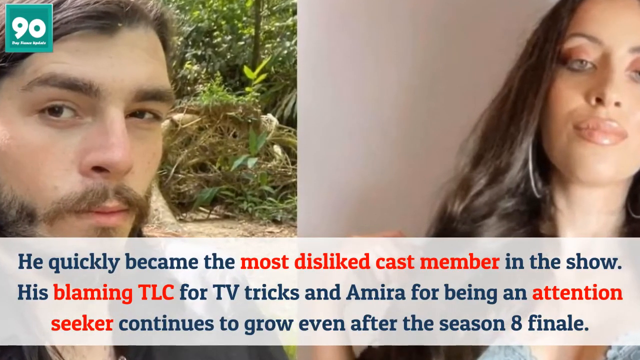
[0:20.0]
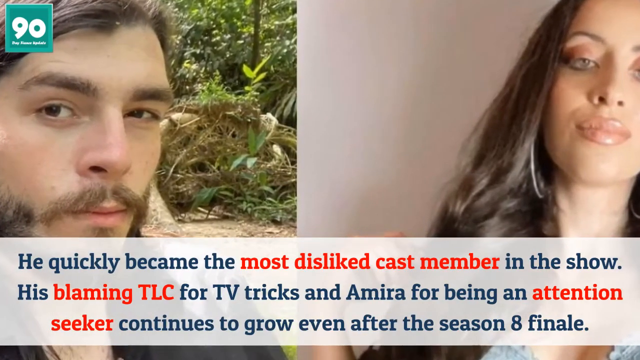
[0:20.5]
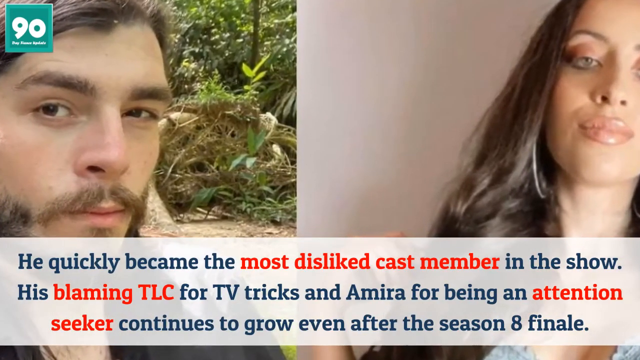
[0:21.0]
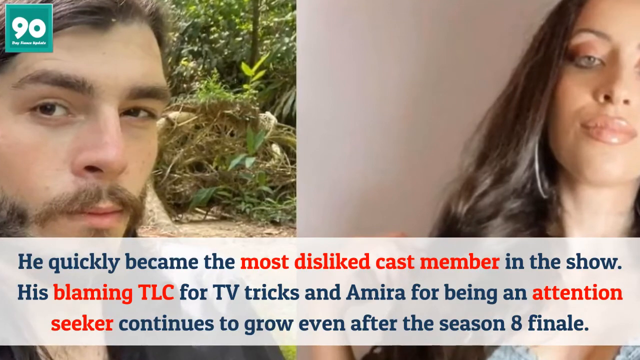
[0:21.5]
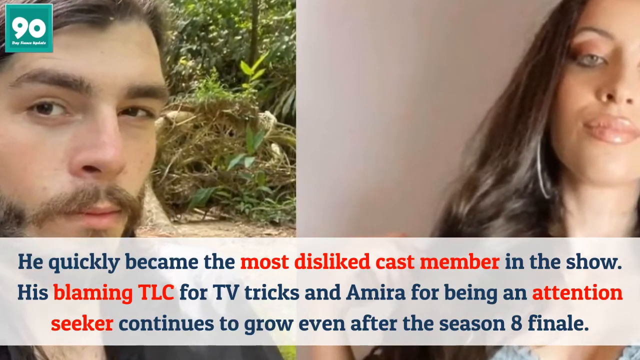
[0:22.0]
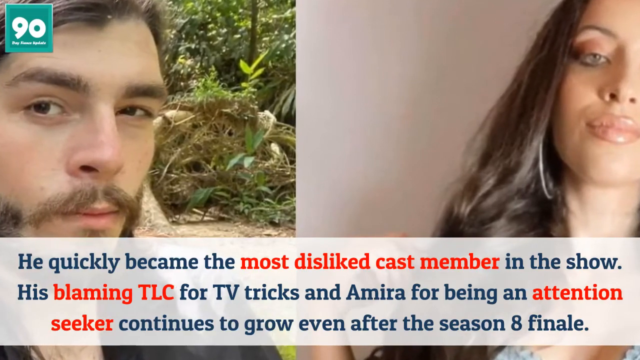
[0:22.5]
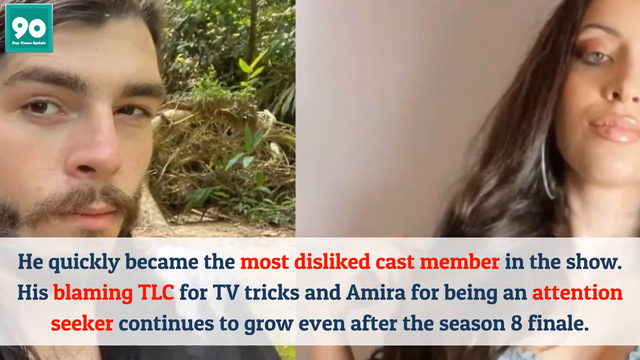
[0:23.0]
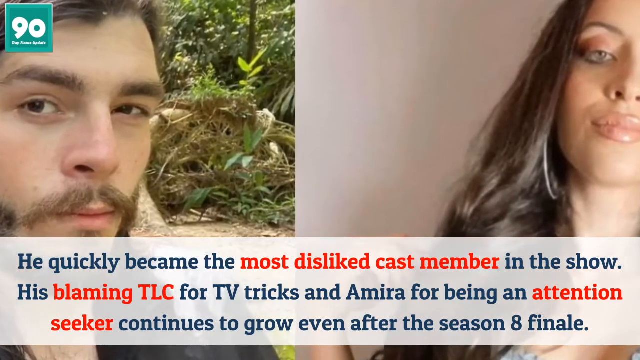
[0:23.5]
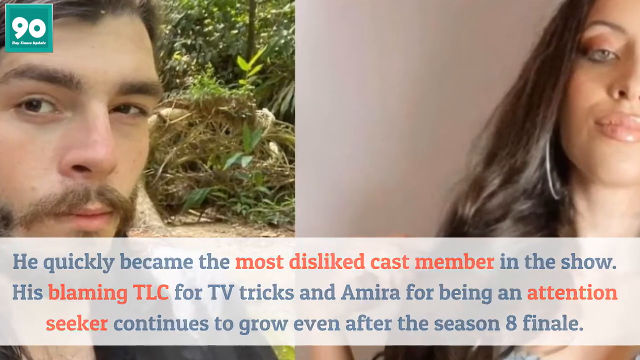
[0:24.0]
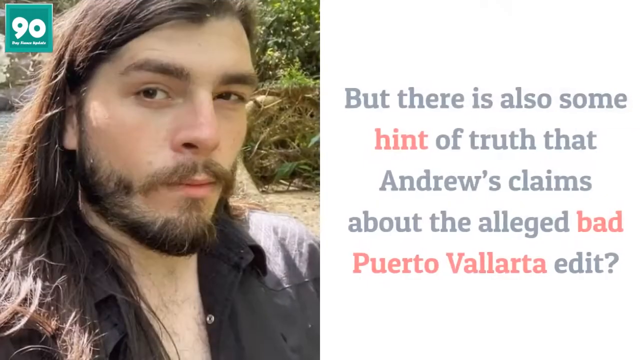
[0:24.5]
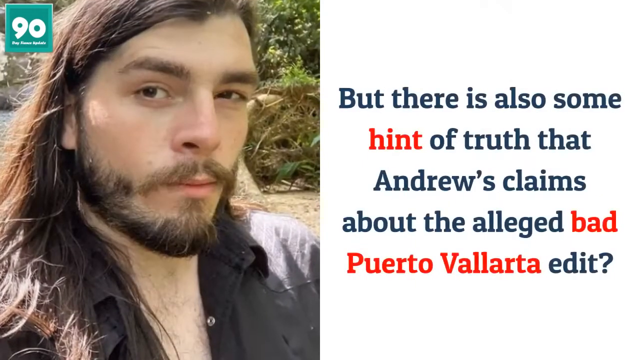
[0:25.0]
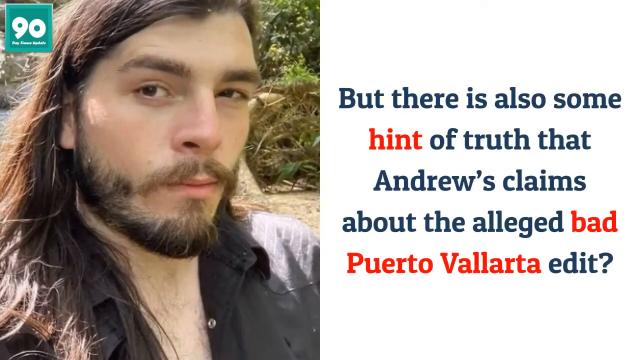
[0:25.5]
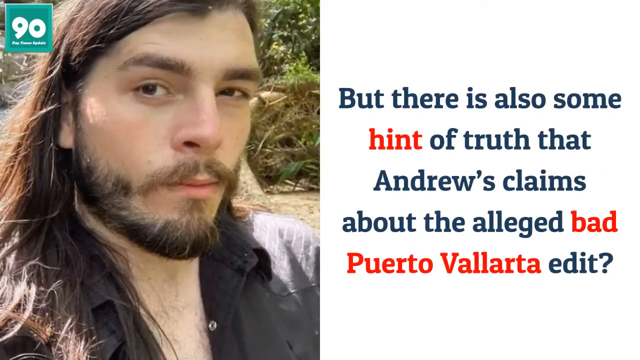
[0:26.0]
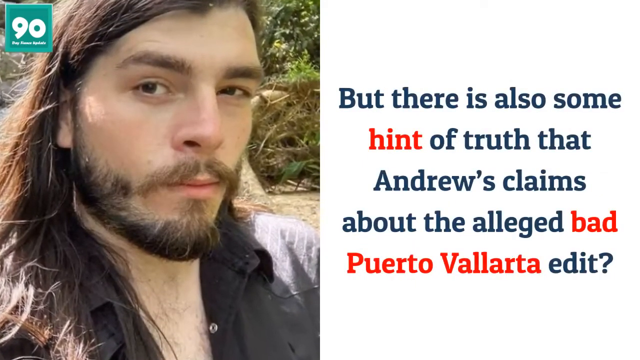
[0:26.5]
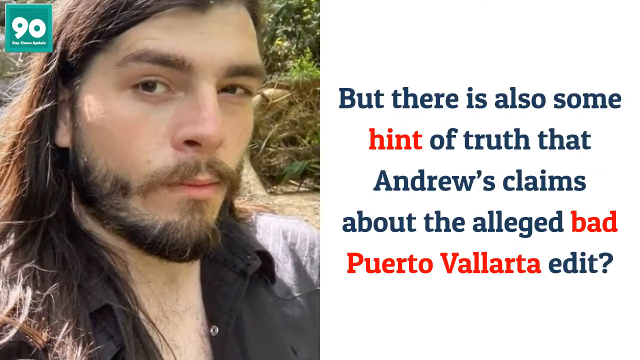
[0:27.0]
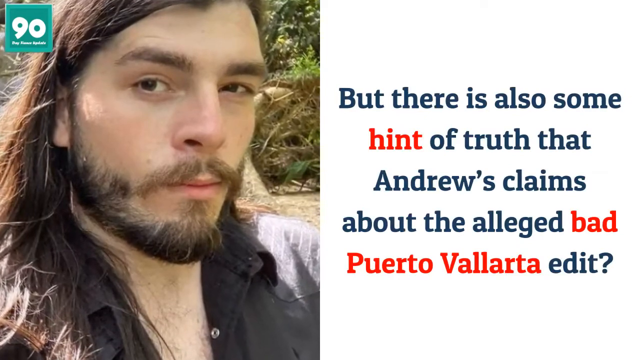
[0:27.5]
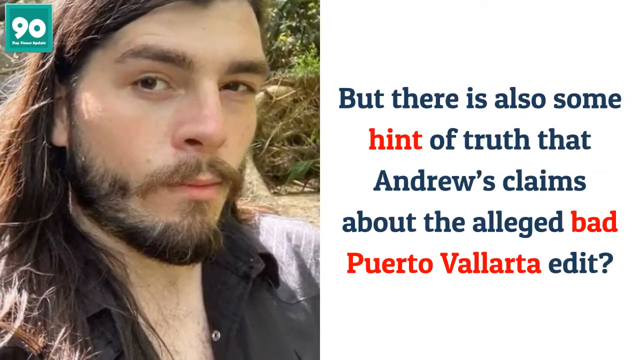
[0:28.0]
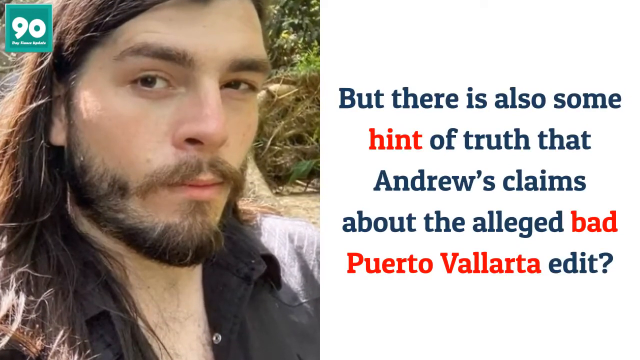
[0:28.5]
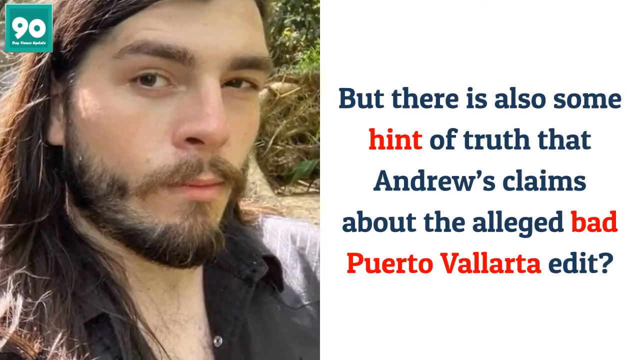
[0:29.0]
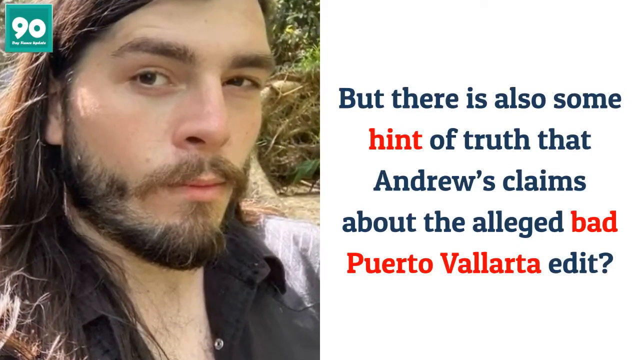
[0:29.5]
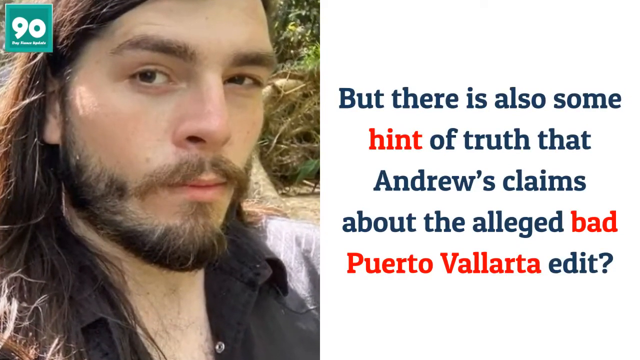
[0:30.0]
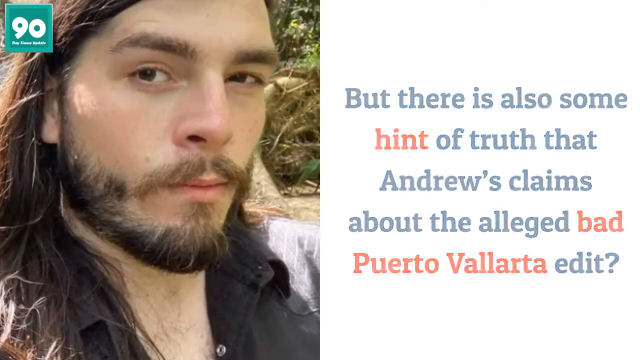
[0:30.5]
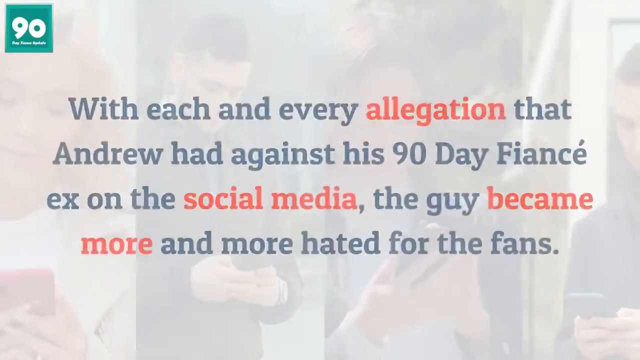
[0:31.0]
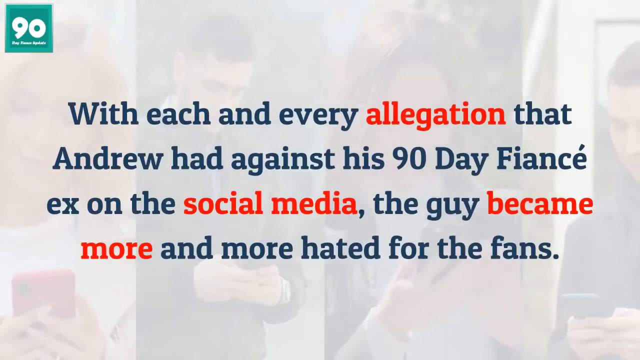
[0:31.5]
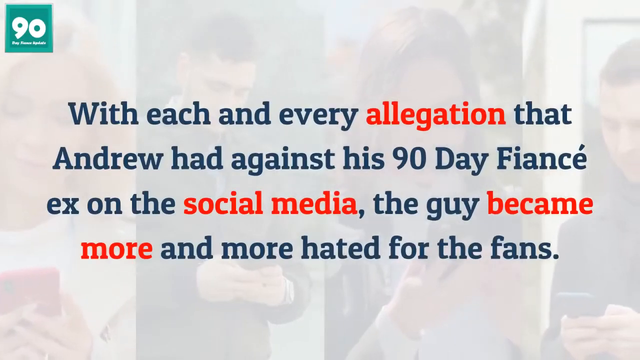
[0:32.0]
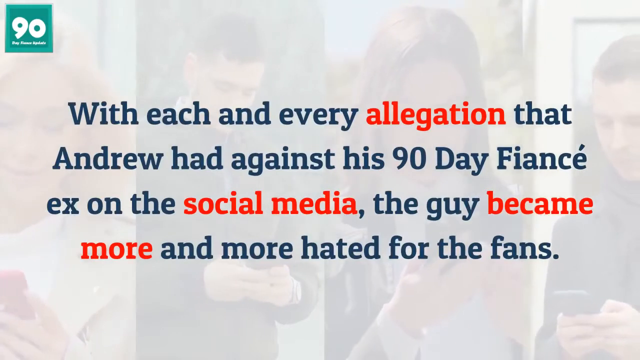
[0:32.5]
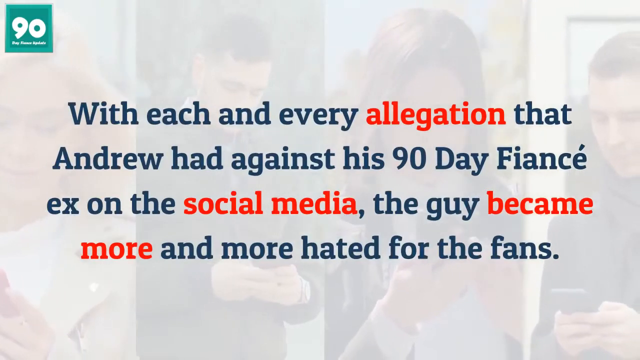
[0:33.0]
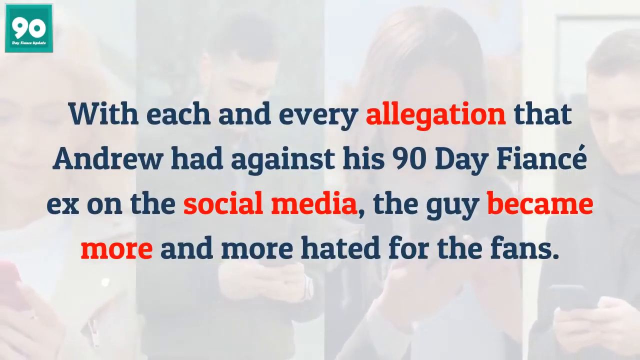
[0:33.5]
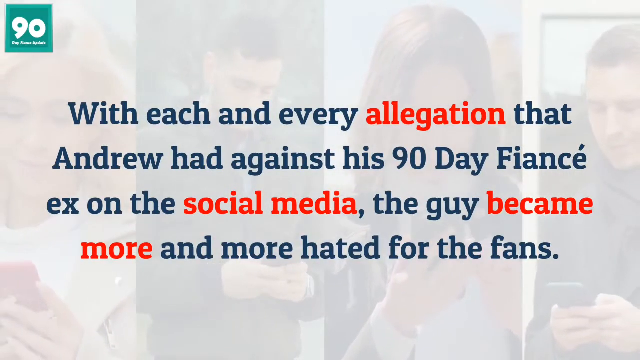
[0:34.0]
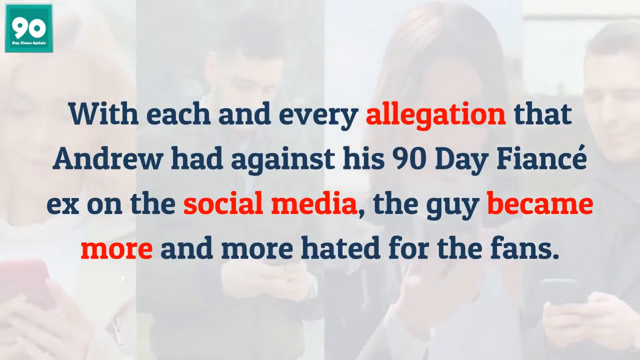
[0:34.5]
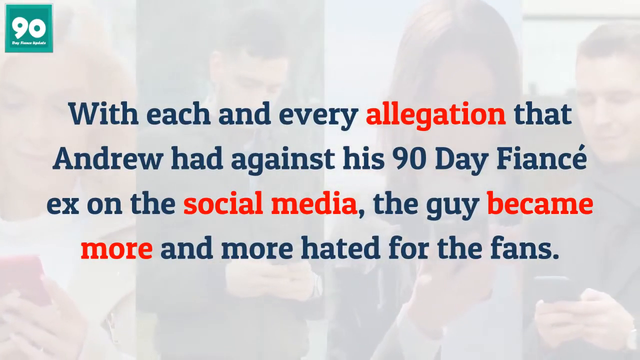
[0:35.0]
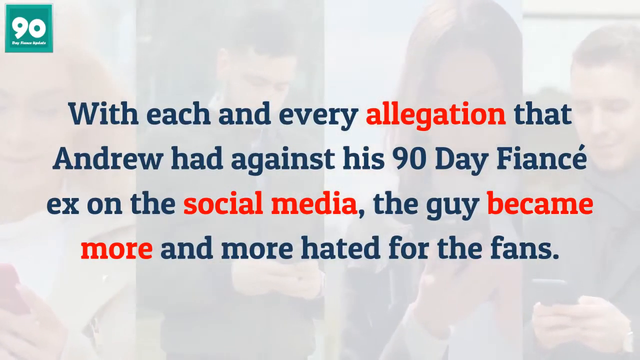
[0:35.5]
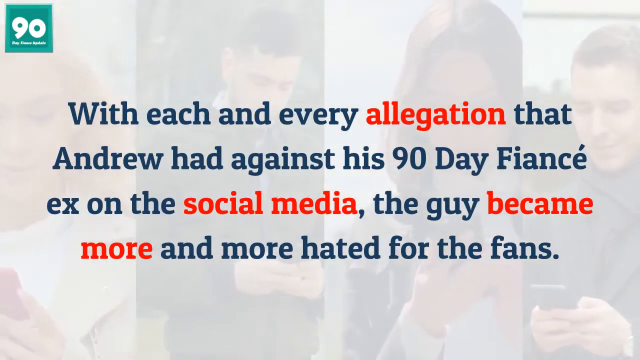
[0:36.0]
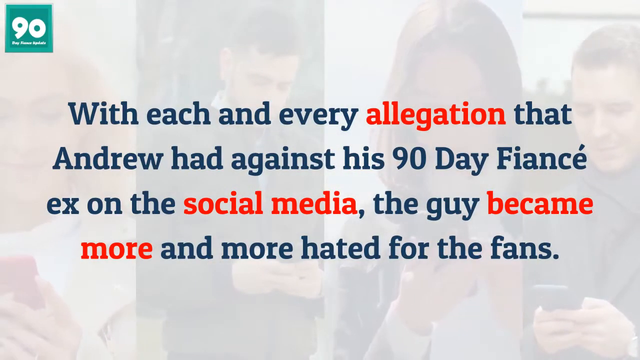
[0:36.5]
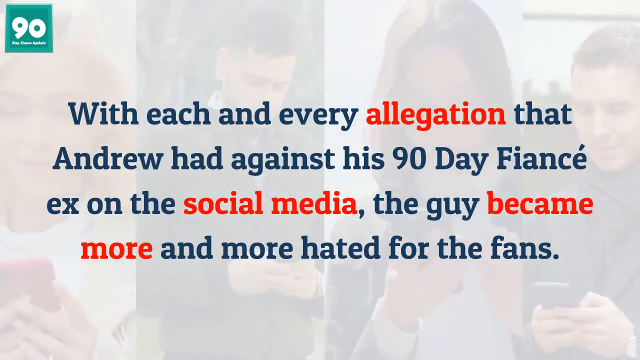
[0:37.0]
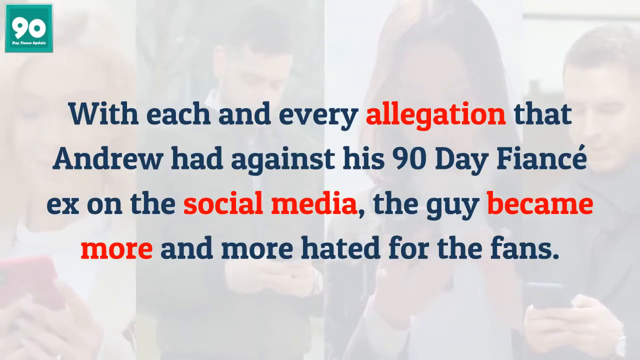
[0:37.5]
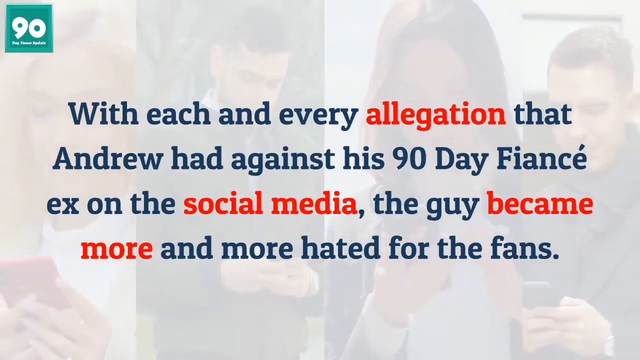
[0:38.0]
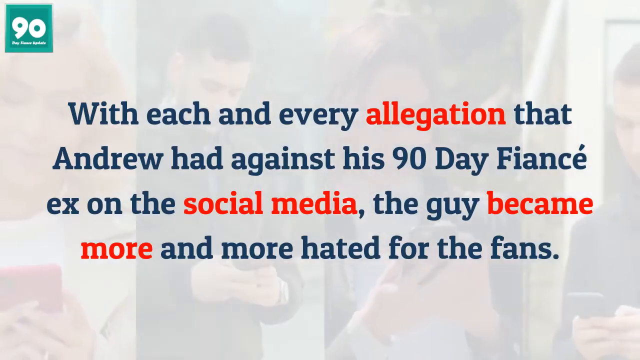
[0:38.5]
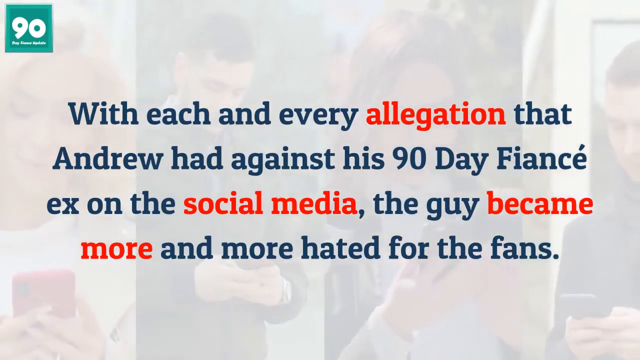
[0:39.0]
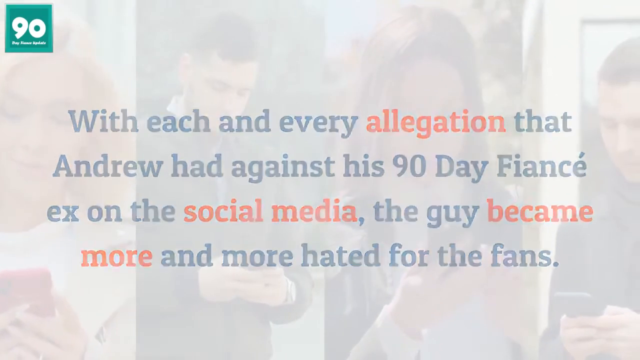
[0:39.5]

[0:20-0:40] The two side-by-side pictures of Andrew and Amira remain on screen with the caption about him being the most disliked cast member on the show. The video cuts to a picture of Andrew by himself, with a caption beside it in black and red text: "But there is also some hint of truth that Andrew claims about the alleged bad Puerto Vallarta edit." Another screen shows the caption "with each and every allegation that Andrew had against his 90 day fiancé ex on the social media, the guy became more and more and more hated for the fans." This caption is over an opaque background that looks like a split screen of four different images with faces that are very hard to make out, apparently other characters from 90 Day Fiancé.